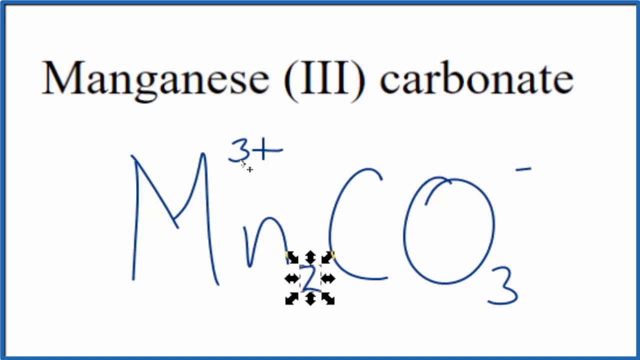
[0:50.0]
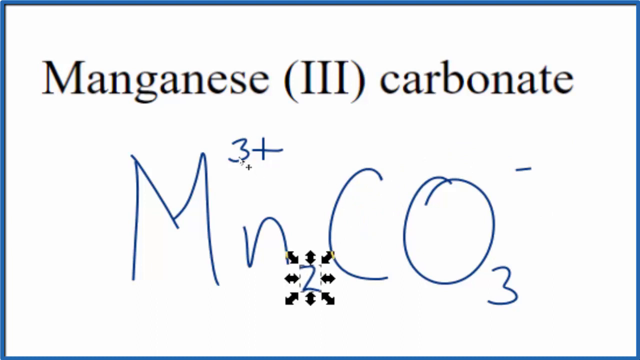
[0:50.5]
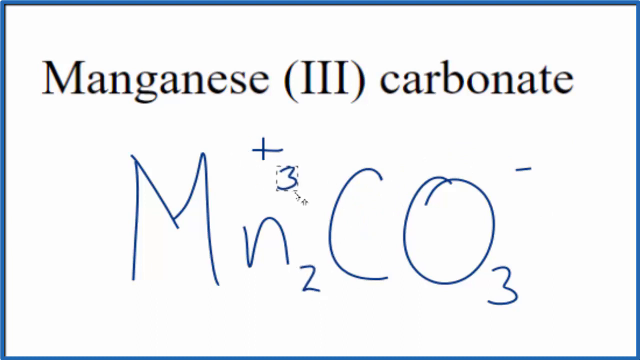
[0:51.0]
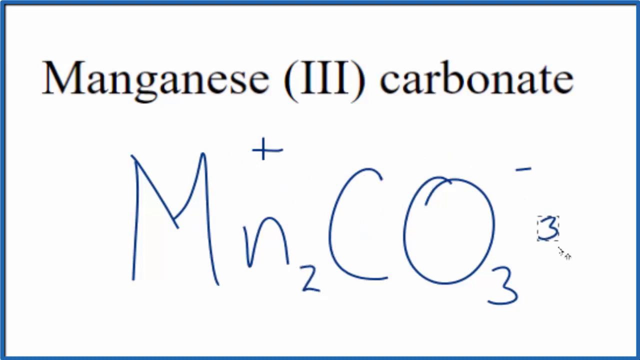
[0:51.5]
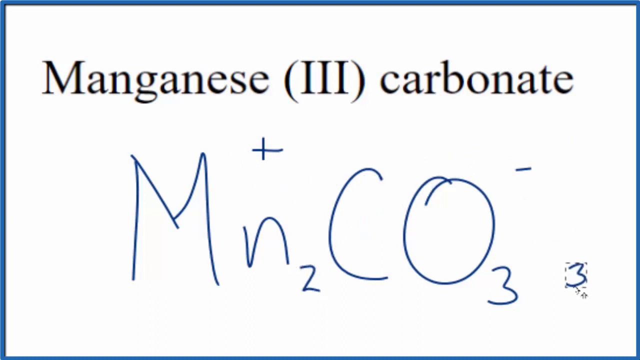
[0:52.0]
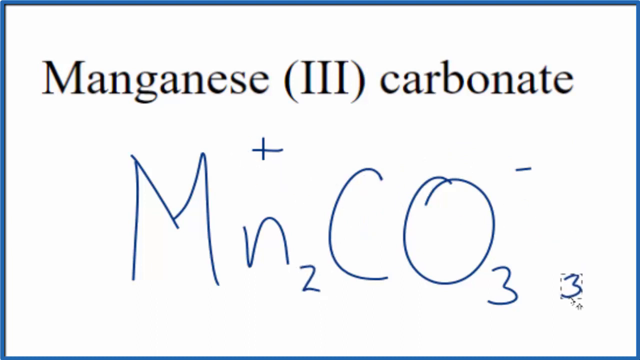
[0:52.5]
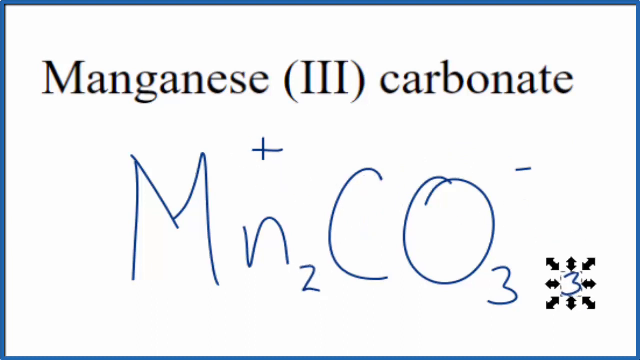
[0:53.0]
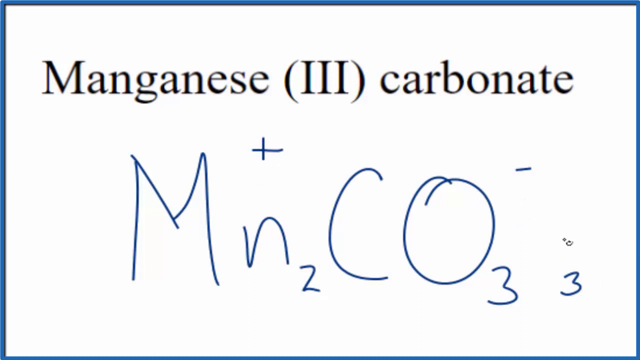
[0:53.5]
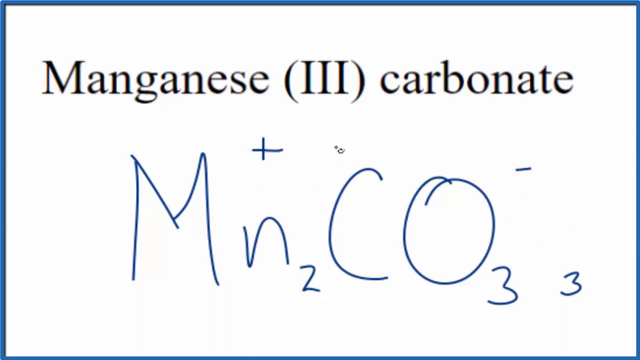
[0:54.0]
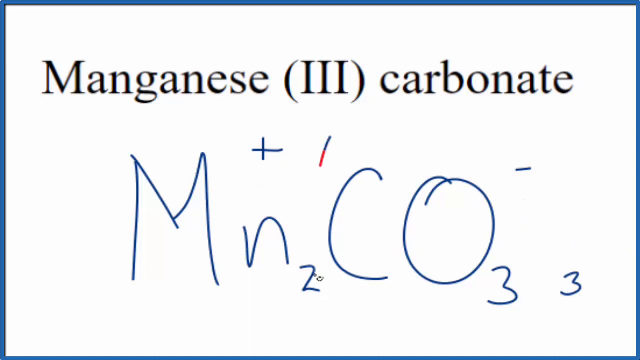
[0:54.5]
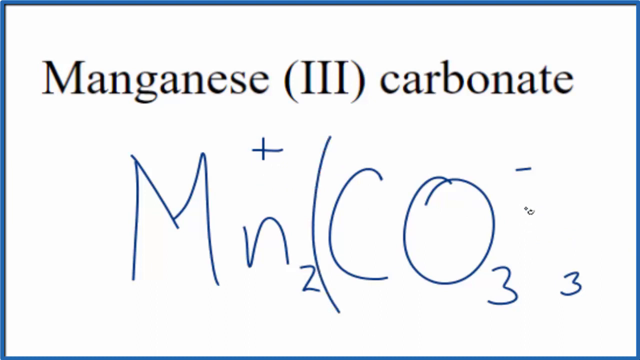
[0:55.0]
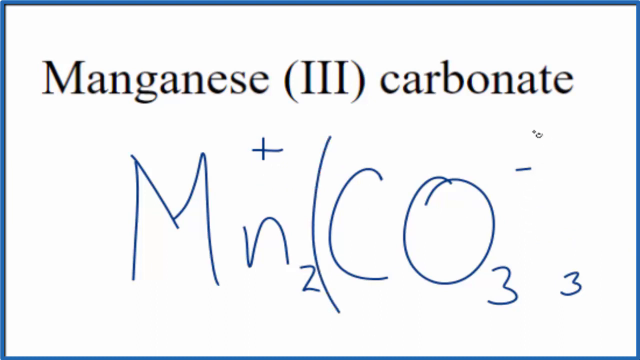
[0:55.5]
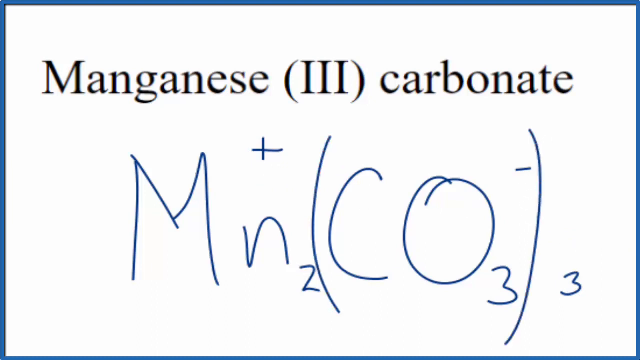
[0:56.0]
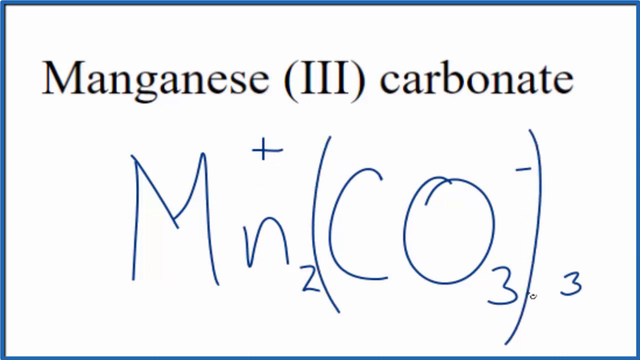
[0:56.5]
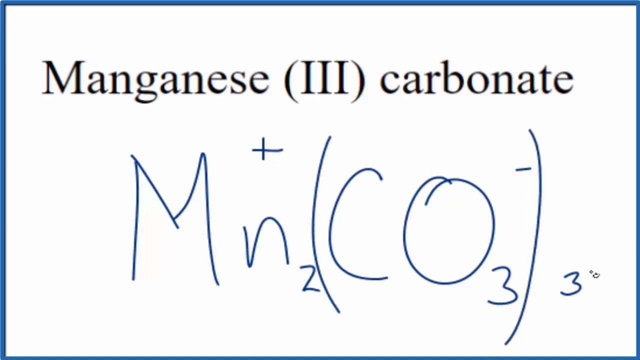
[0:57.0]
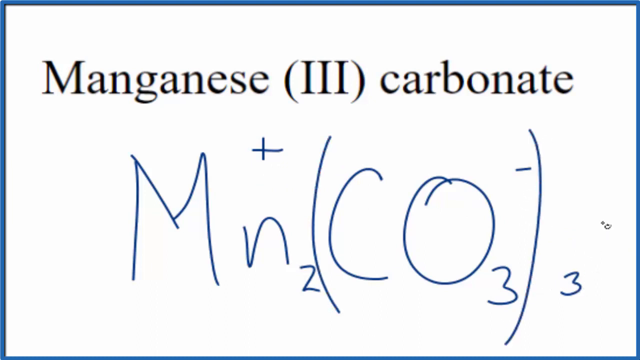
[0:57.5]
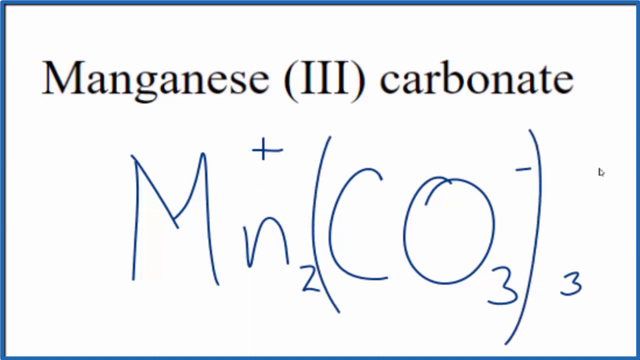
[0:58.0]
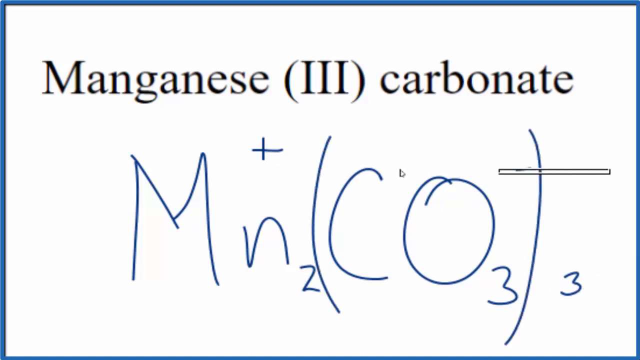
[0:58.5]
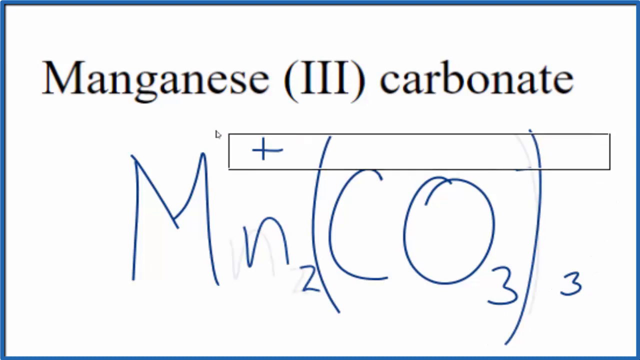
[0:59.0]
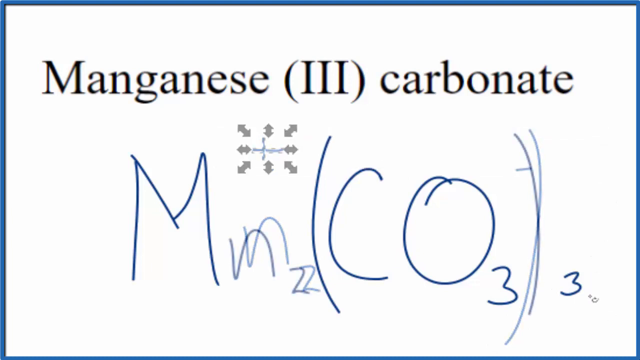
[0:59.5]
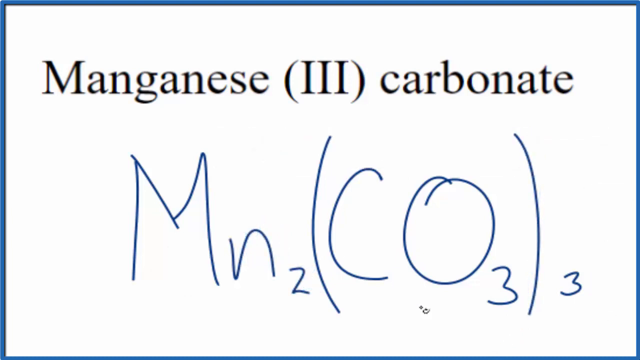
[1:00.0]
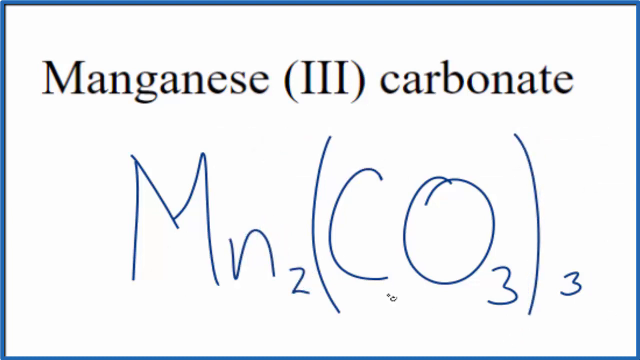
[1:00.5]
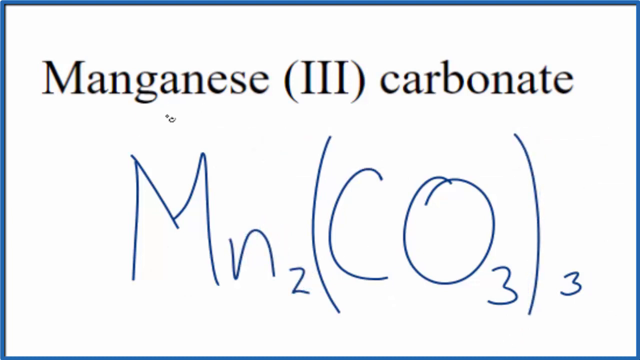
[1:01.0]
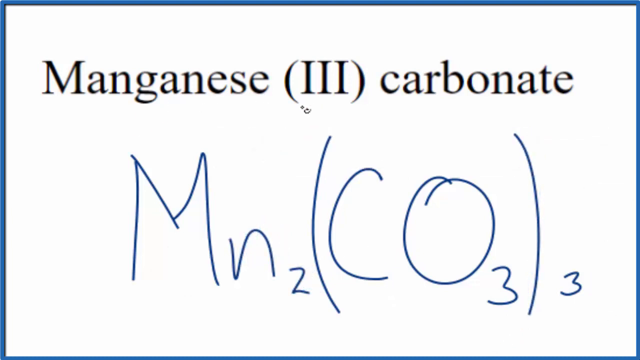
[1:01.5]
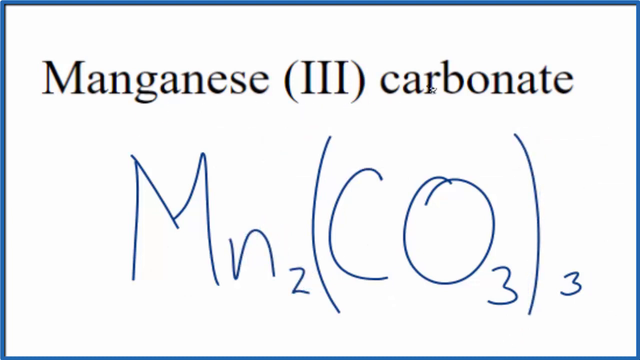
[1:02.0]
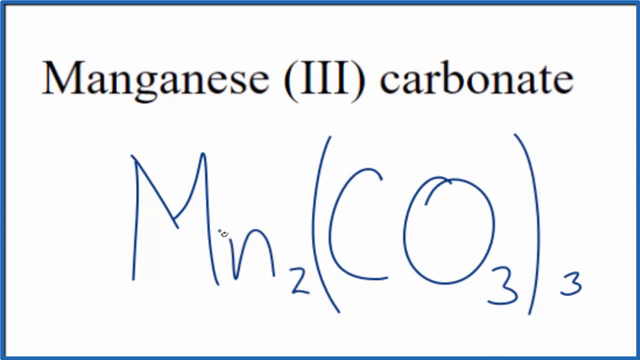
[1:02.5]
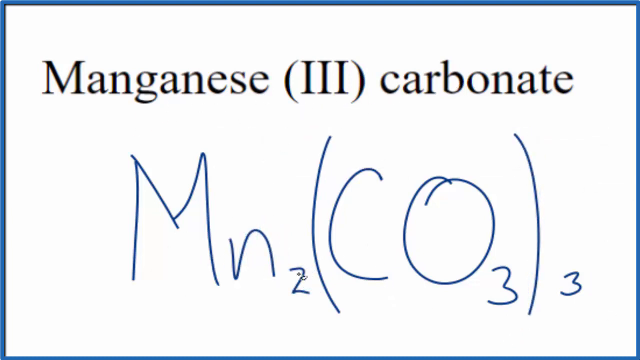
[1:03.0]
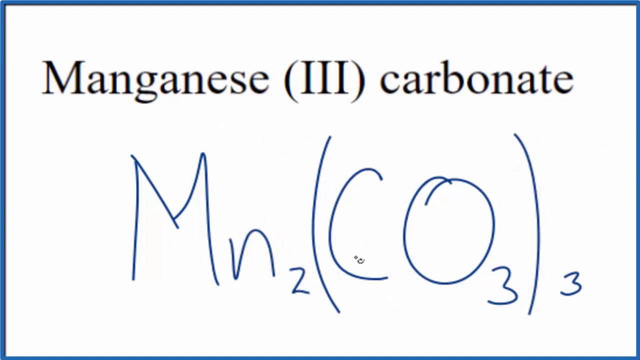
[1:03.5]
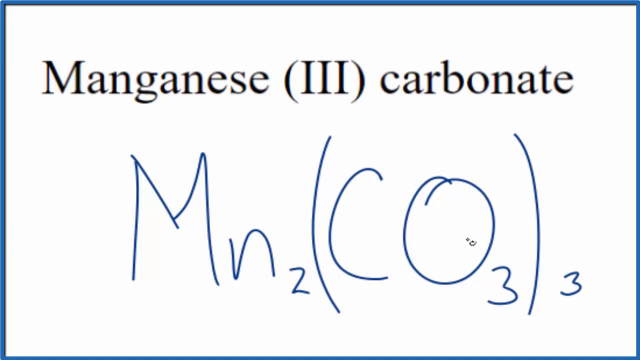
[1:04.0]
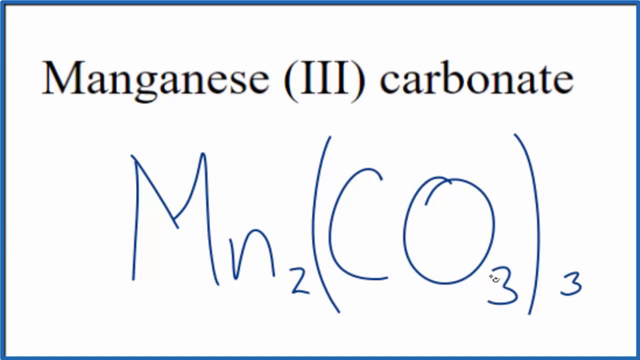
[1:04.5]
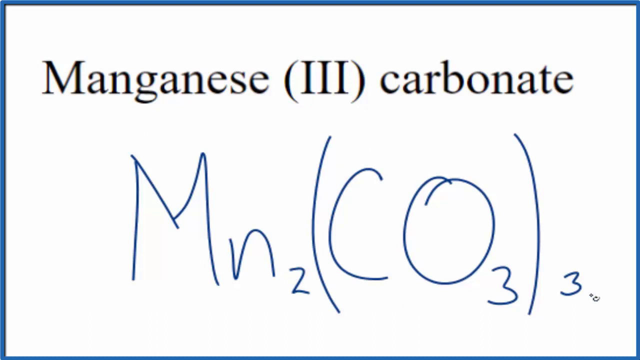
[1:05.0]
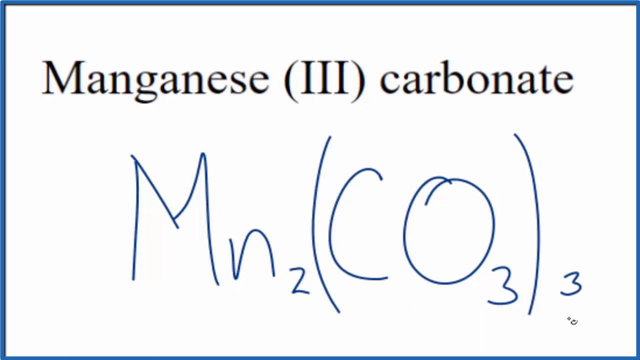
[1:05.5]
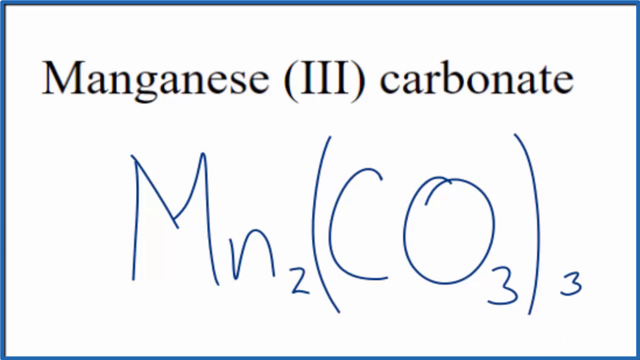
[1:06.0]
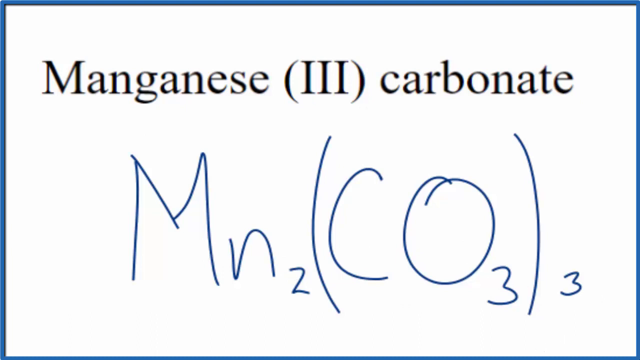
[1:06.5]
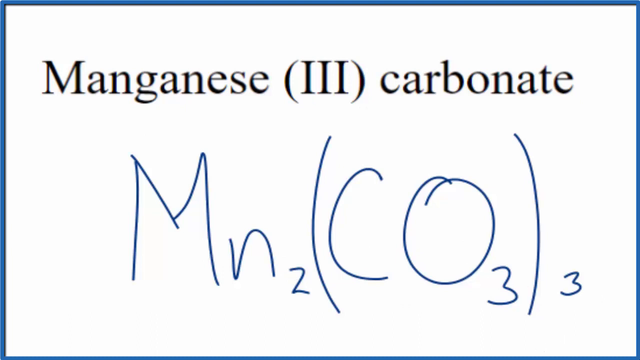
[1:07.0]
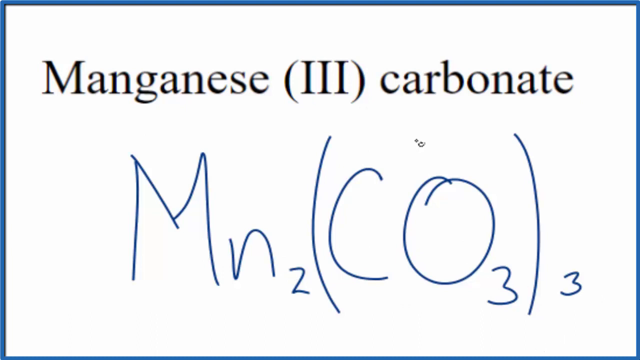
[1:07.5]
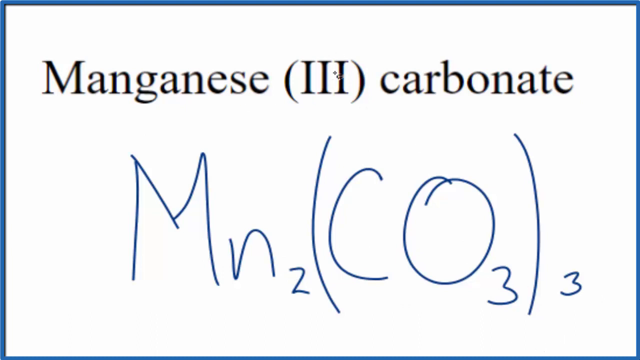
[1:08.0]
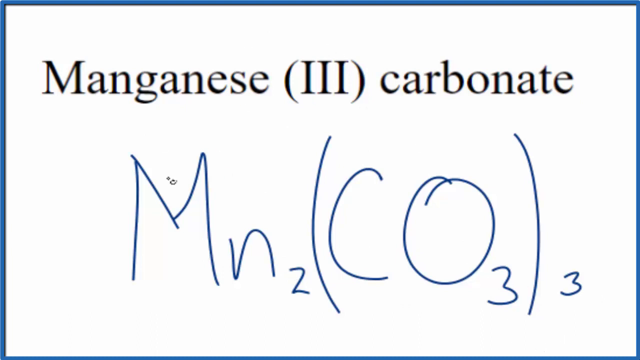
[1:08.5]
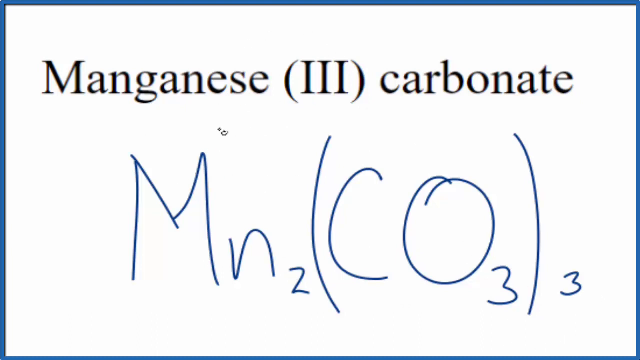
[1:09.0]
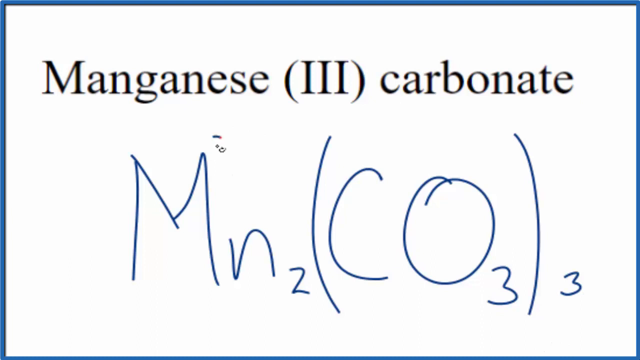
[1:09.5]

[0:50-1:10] The black arrows around the 2 go away. The 3 that was above the n is moved over to the 3 by the O, leaving the plus sign by the n. When it is placed, black arrows come up and completely surround the number. Parentheses are drawn so that the M has the plus sign at the top of the n and the 2, followed by C O 3 minus inside parentheses, with the last little 3 left outside by itself. A box is drawn, and the plus and minus signs that were there appear to be removed. The small mouse pointer hovers all over the screen, and then another 3 is drawn above the M.